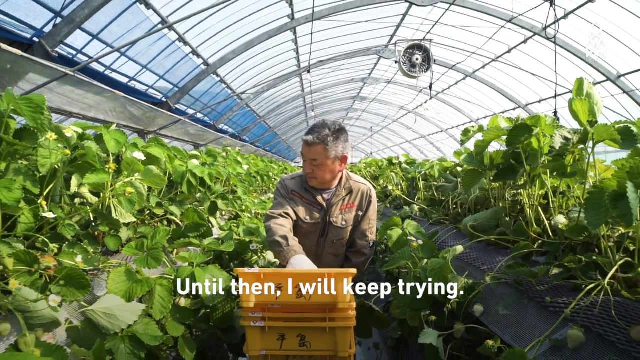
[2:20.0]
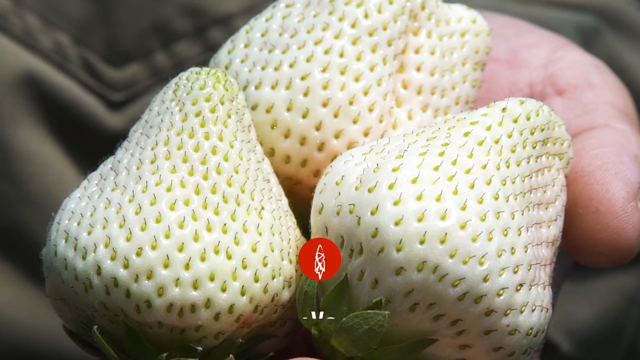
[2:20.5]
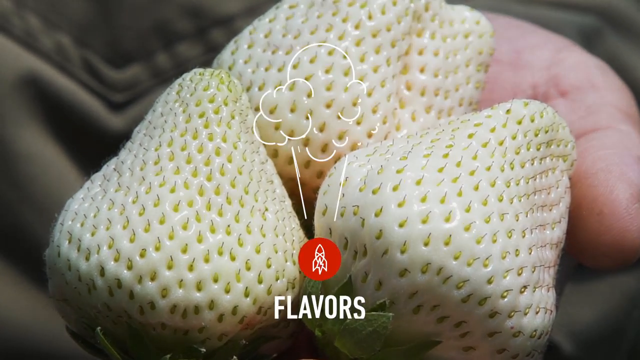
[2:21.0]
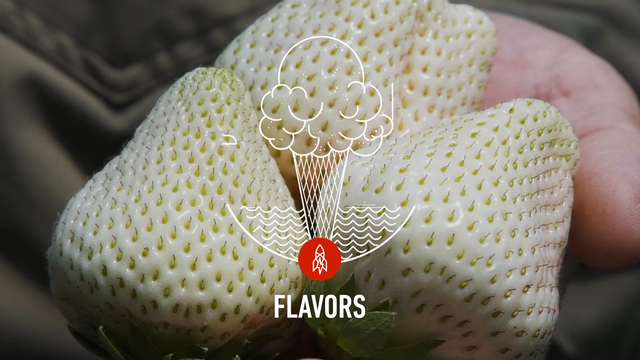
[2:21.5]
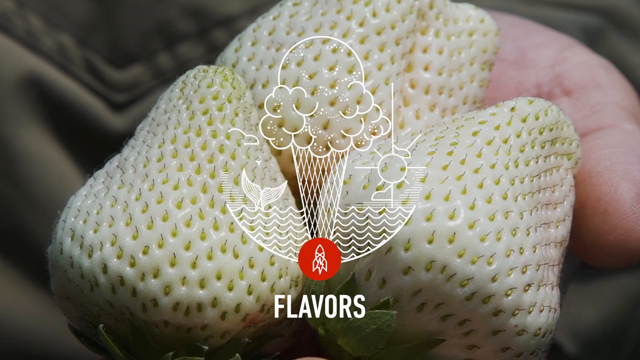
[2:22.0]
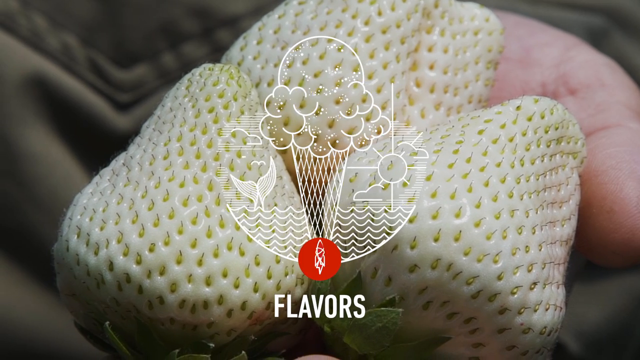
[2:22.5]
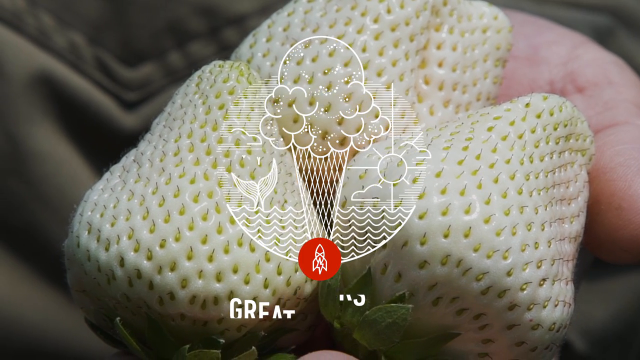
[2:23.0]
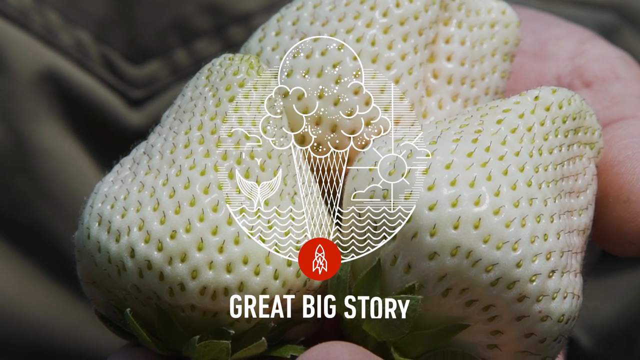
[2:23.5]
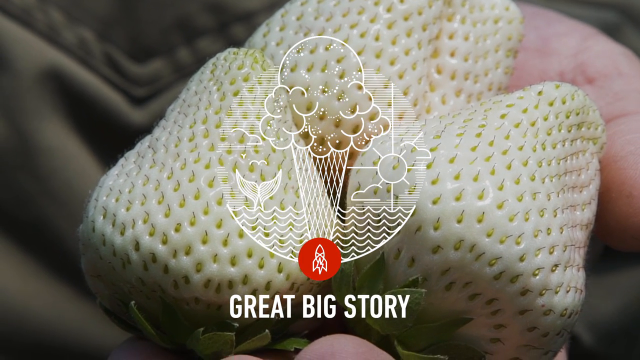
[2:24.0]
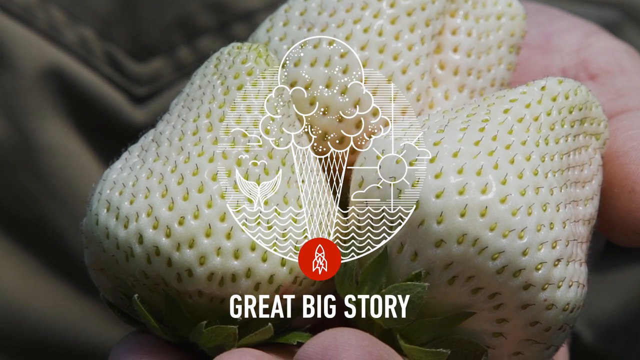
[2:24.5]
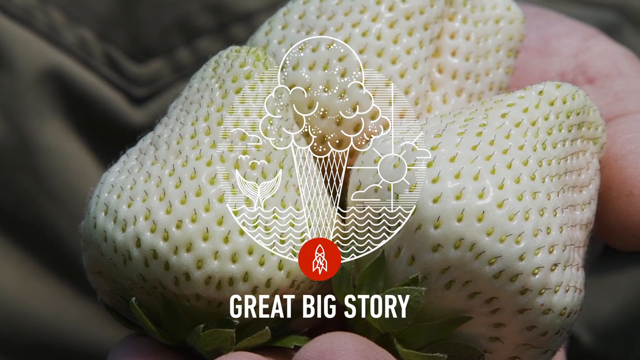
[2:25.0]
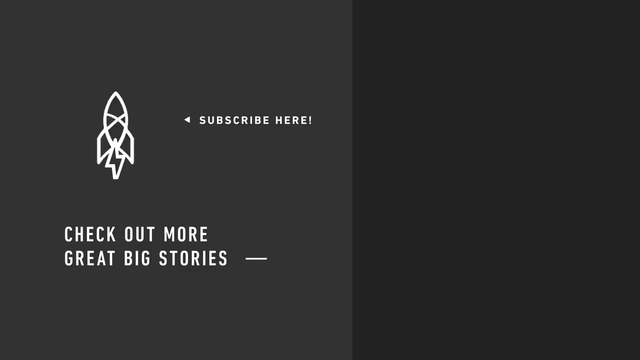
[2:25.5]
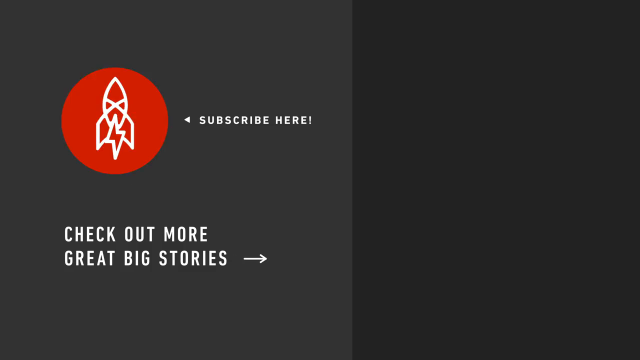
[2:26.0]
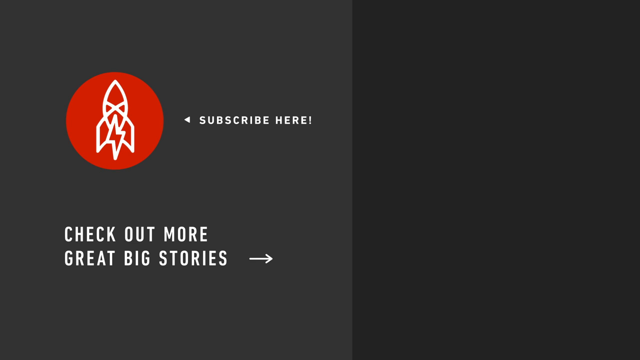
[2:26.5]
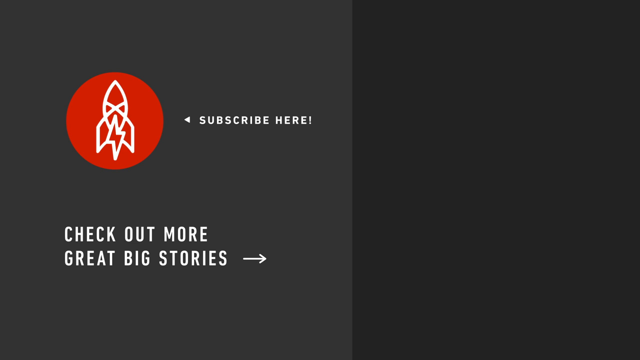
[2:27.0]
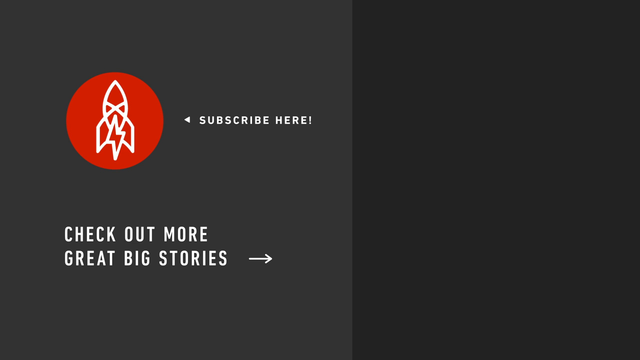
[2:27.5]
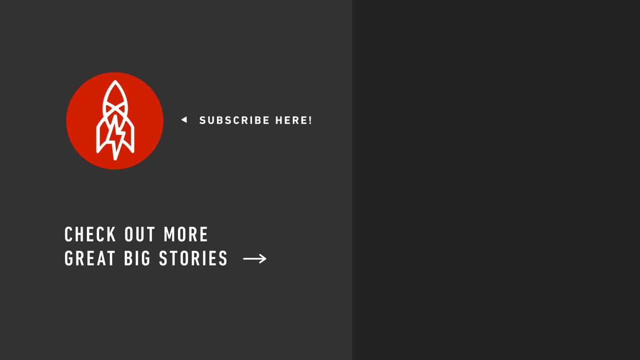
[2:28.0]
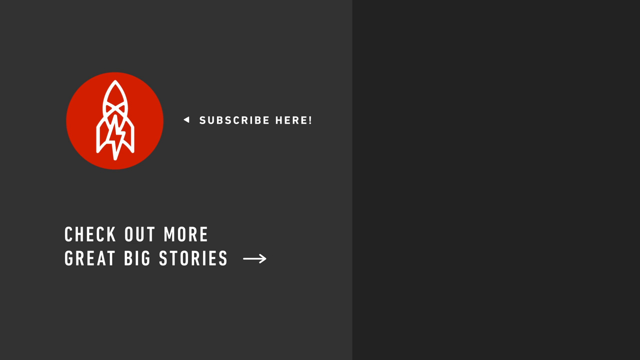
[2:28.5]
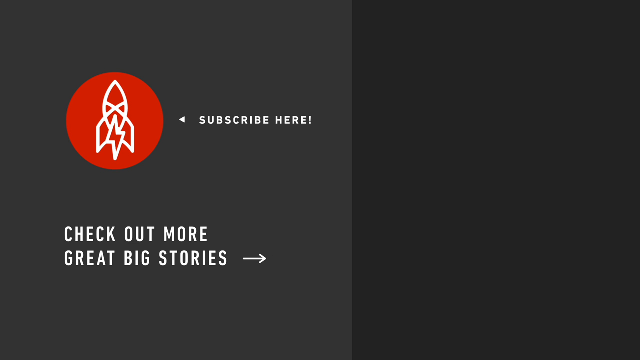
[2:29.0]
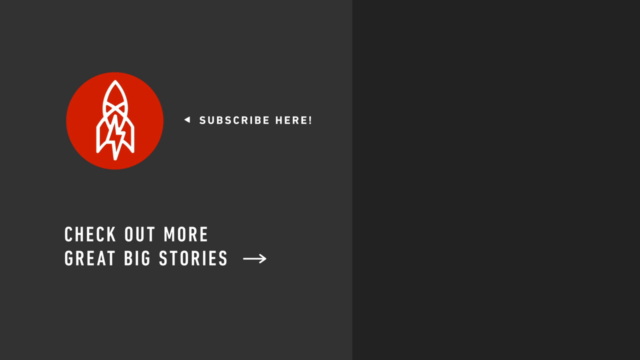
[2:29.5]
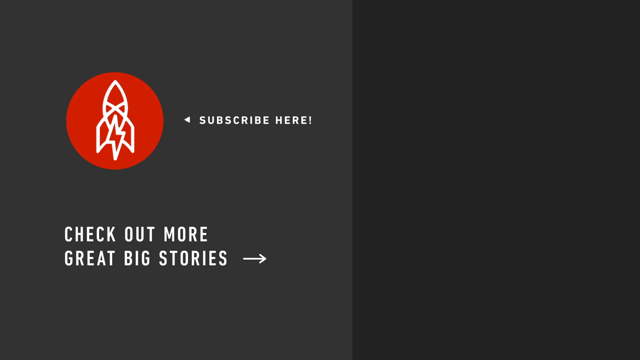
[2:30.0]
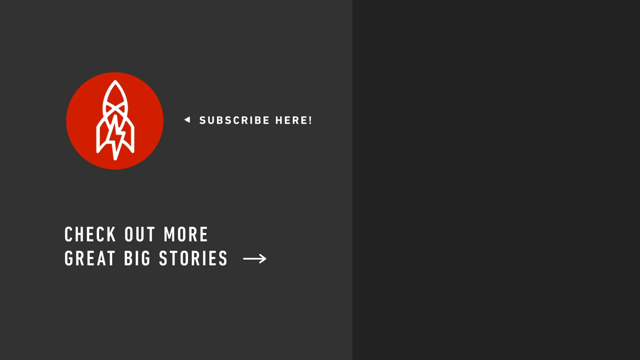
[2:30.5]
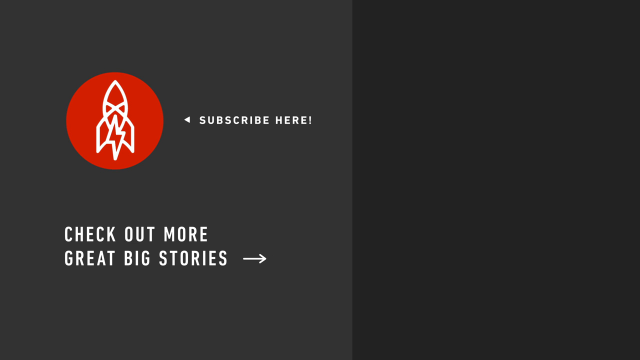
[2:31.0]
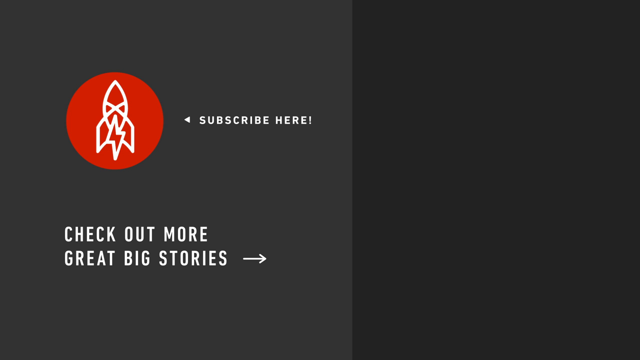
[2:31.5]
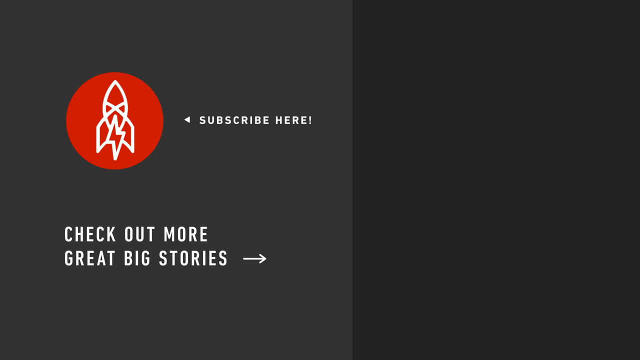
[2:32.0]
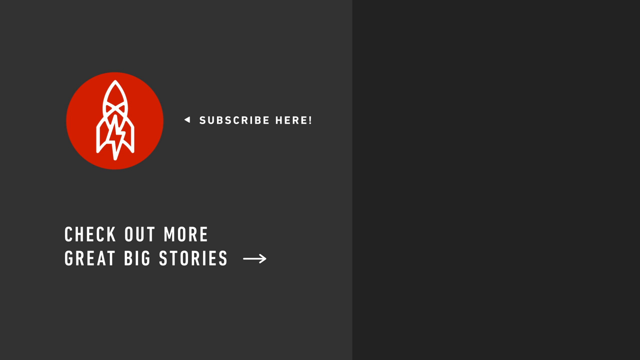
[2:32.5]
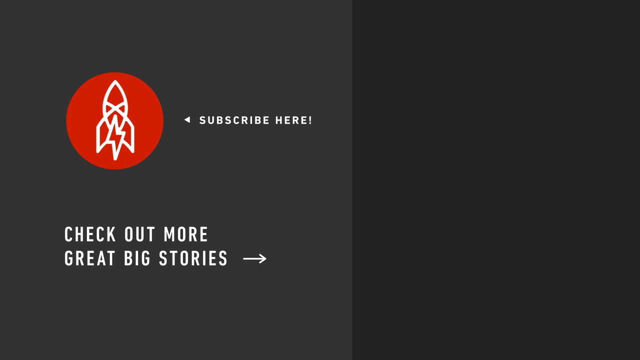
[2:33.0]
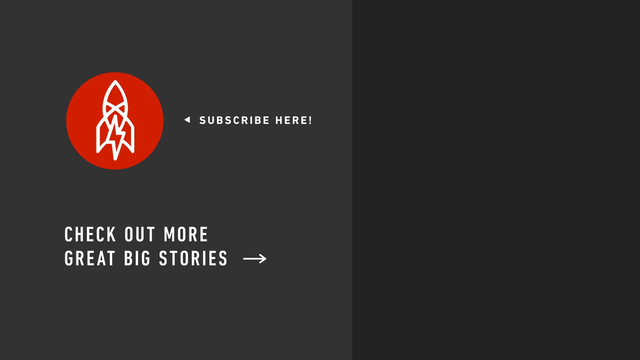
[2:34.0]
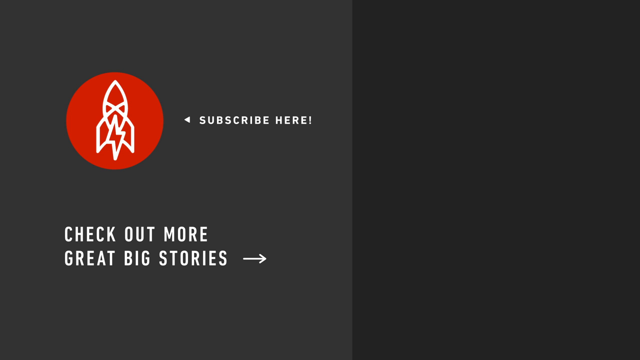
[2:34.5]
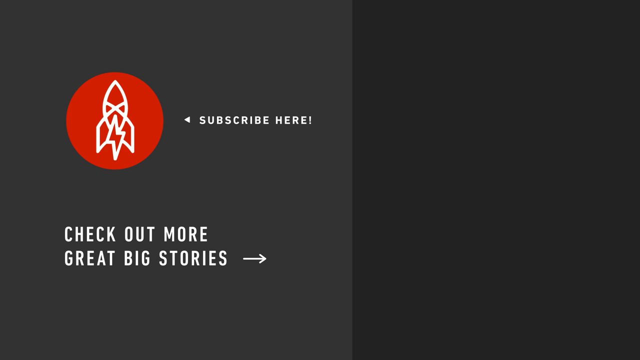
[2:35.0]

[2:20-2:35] Three large white jewel strawberries are shown in what is presumably Mr. Tashima's hand. Then a cartoon appears with the words "flavors" and "great big story", a red rocket ship icon that says "subscribe here", and text reading "check out more great big stories".